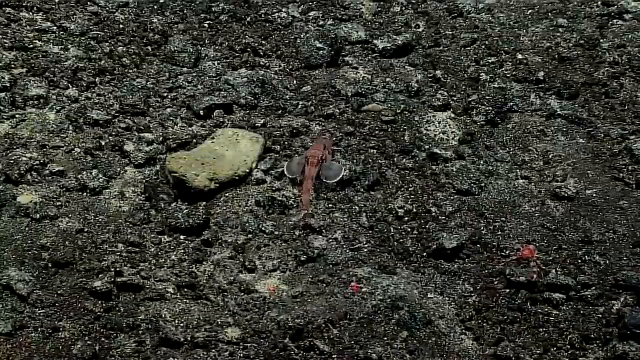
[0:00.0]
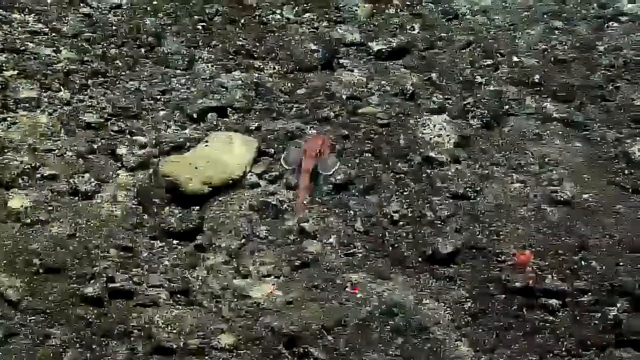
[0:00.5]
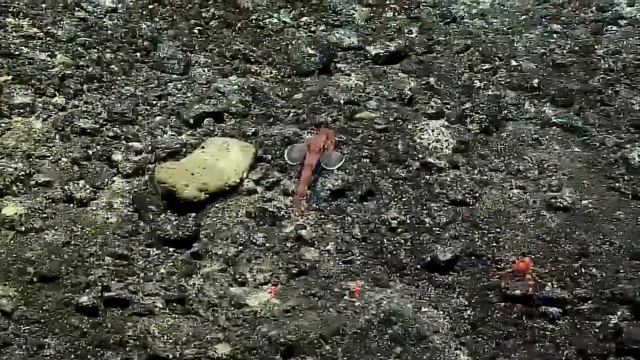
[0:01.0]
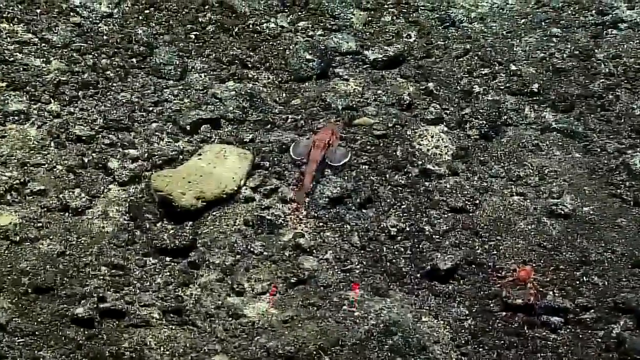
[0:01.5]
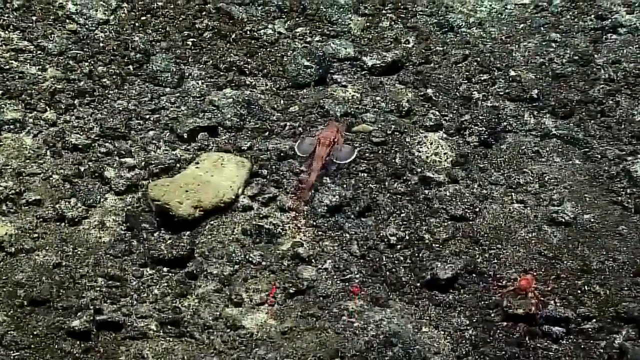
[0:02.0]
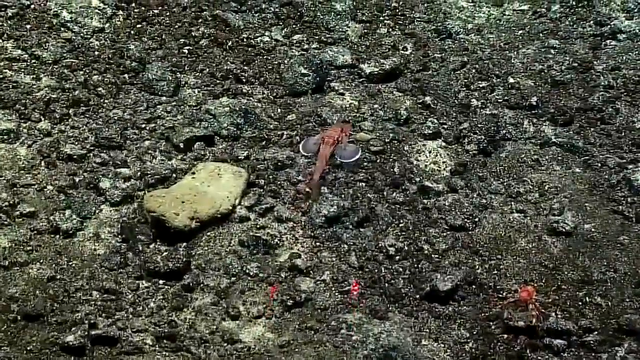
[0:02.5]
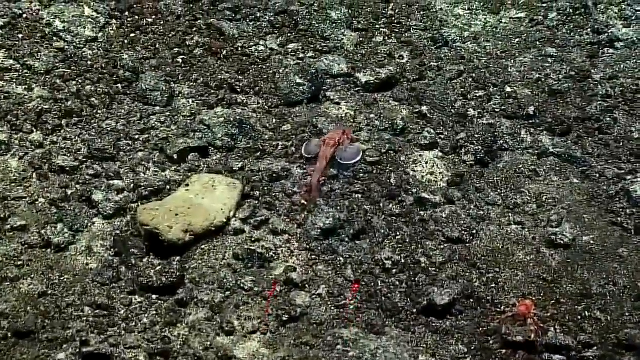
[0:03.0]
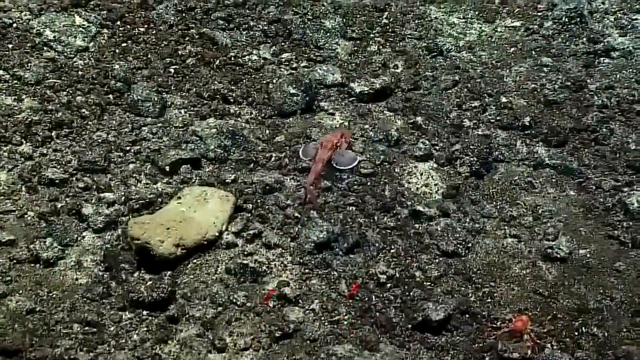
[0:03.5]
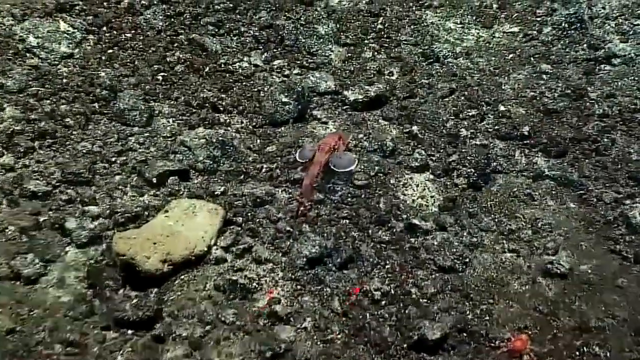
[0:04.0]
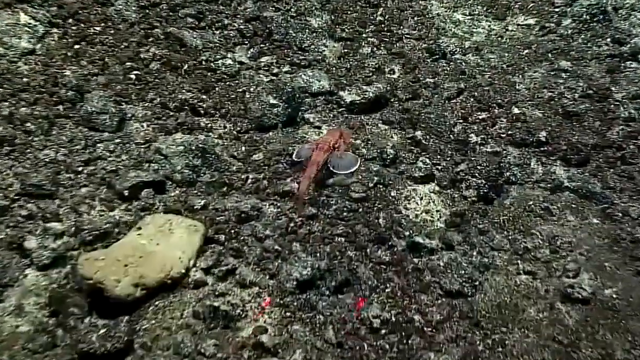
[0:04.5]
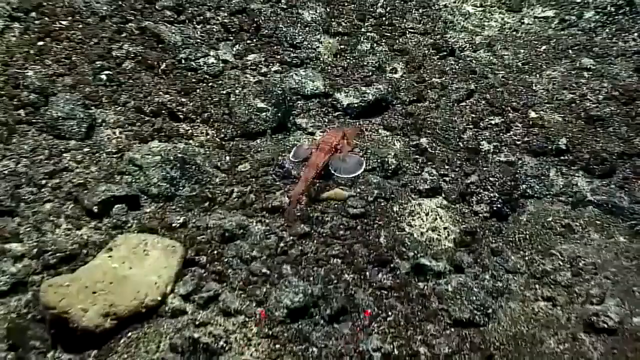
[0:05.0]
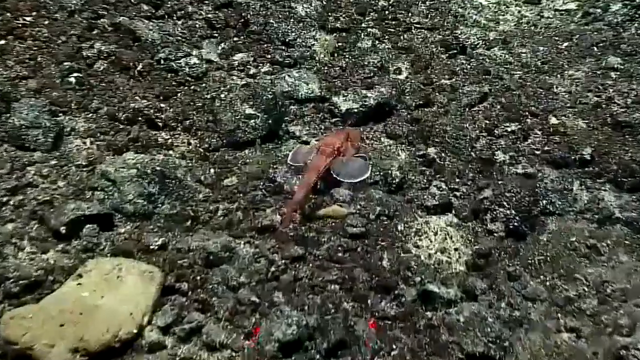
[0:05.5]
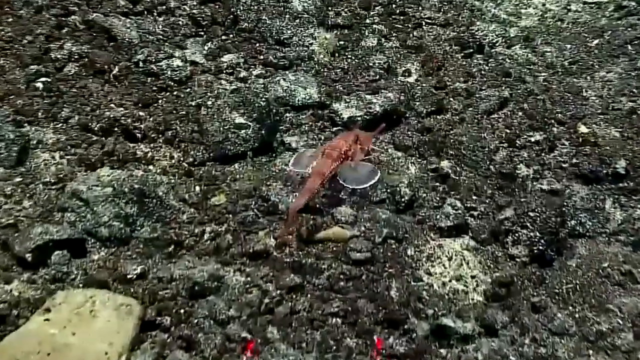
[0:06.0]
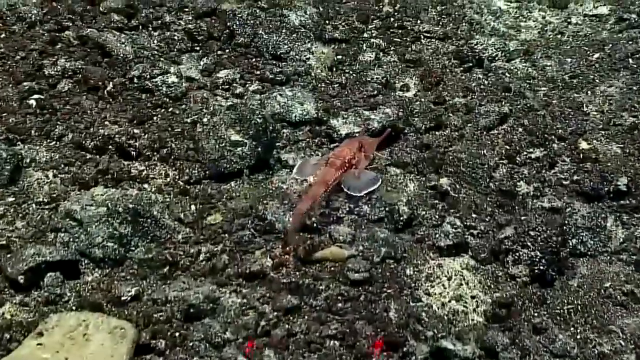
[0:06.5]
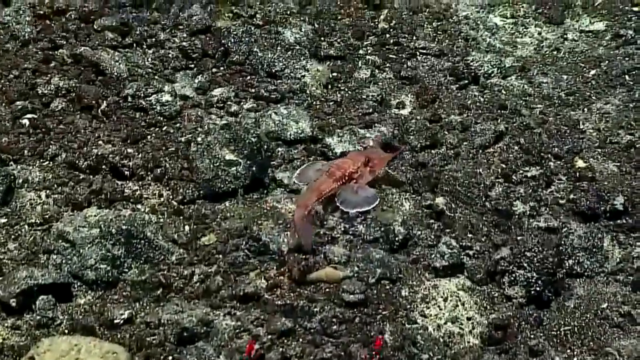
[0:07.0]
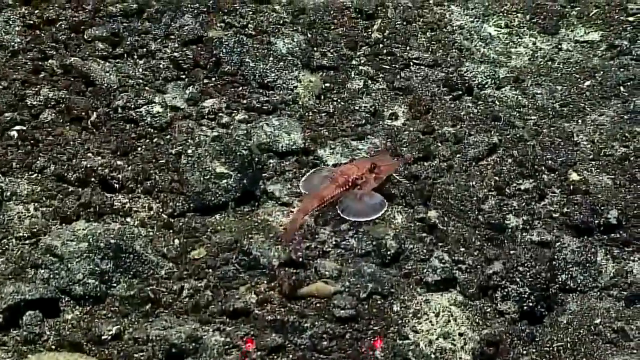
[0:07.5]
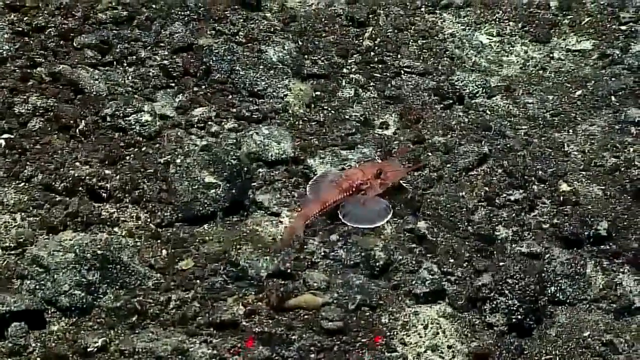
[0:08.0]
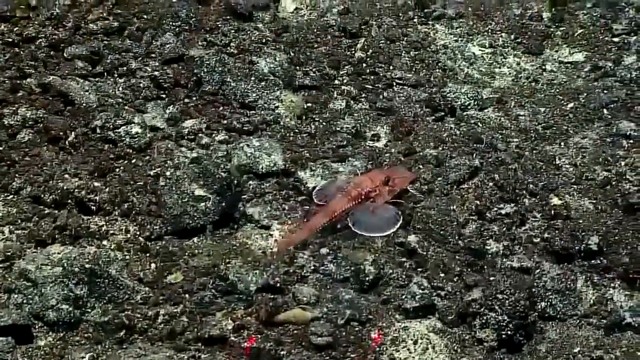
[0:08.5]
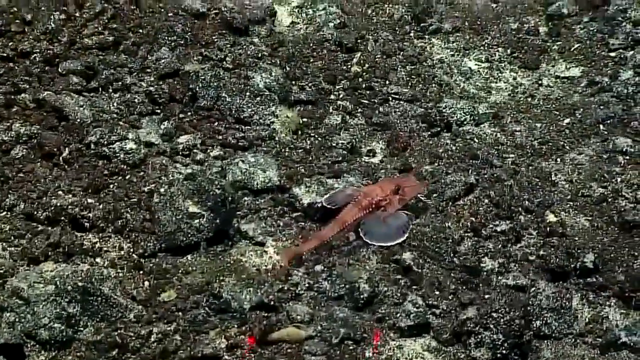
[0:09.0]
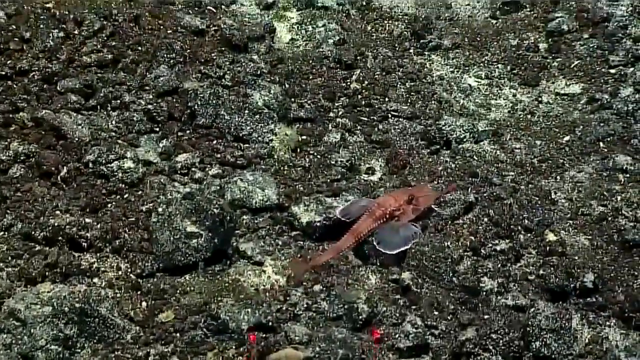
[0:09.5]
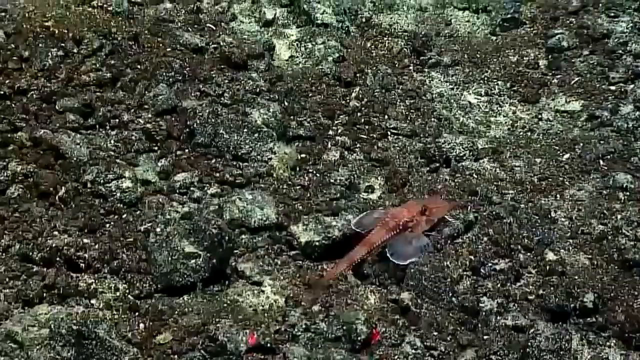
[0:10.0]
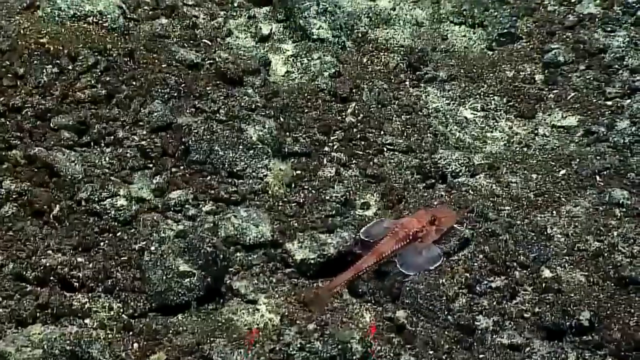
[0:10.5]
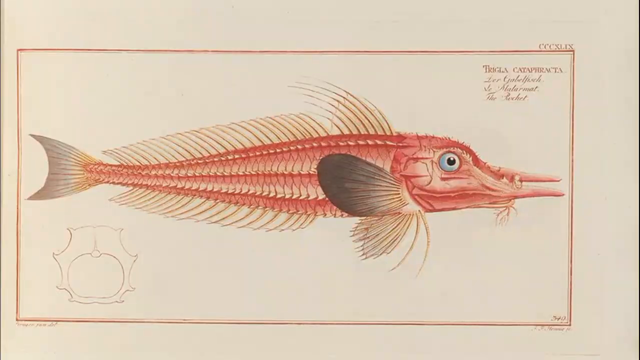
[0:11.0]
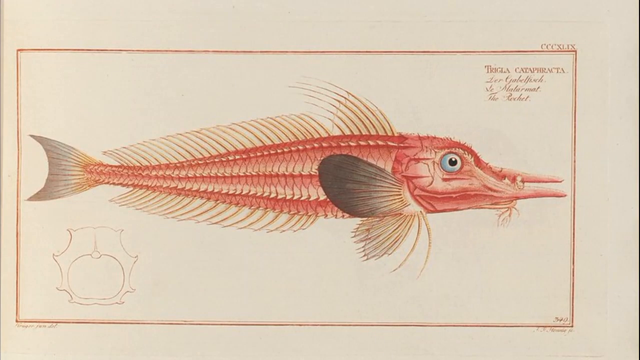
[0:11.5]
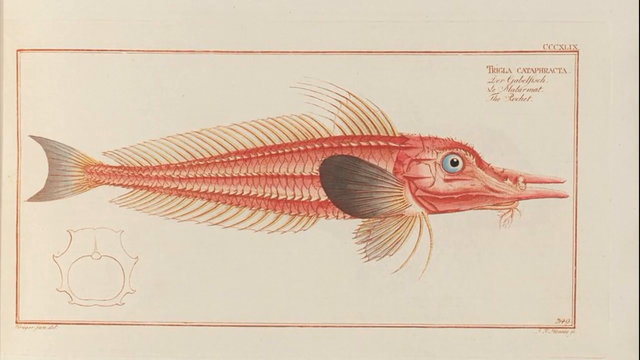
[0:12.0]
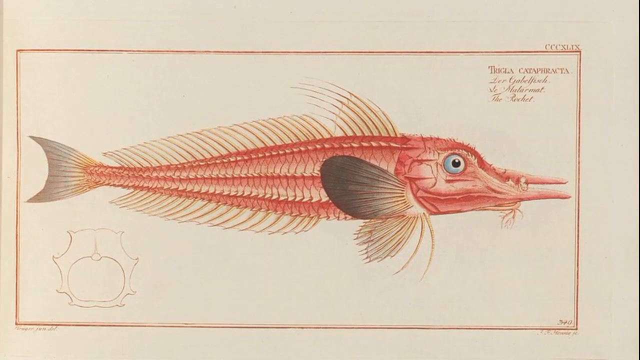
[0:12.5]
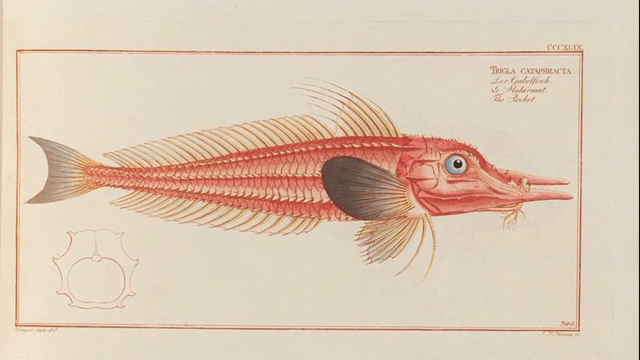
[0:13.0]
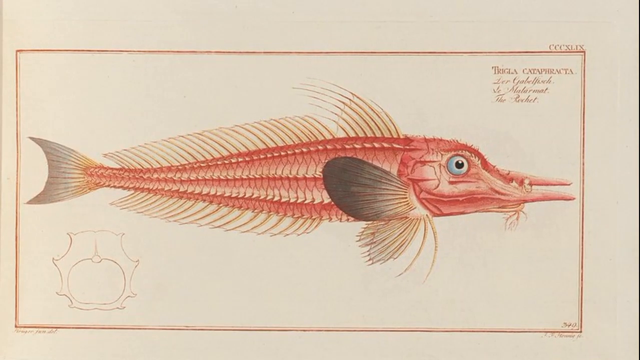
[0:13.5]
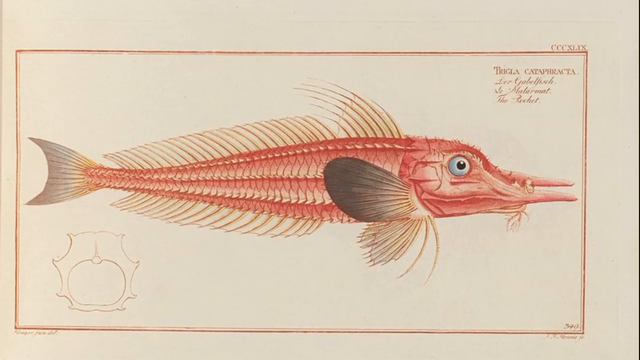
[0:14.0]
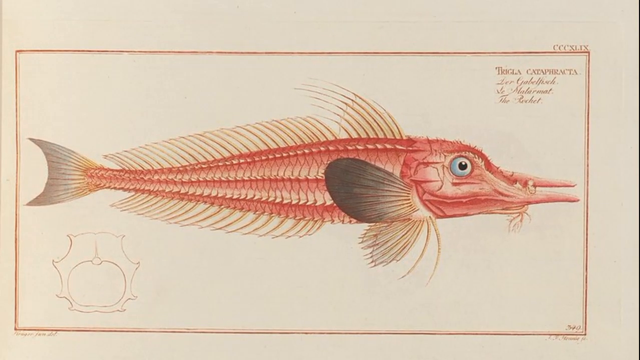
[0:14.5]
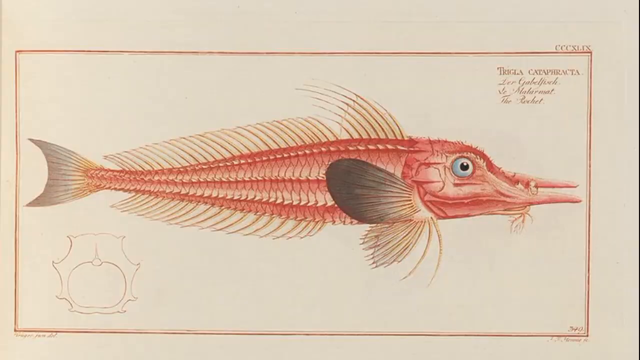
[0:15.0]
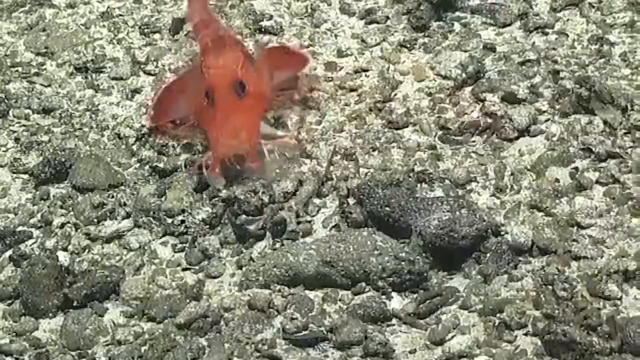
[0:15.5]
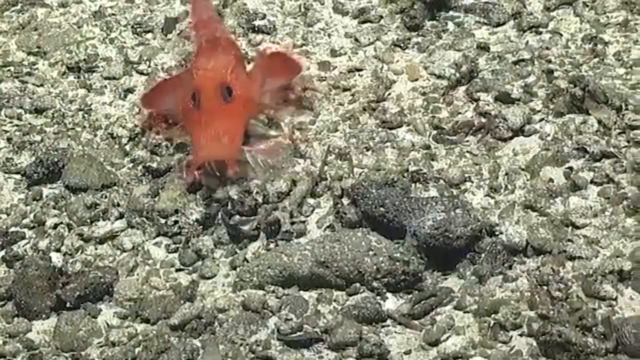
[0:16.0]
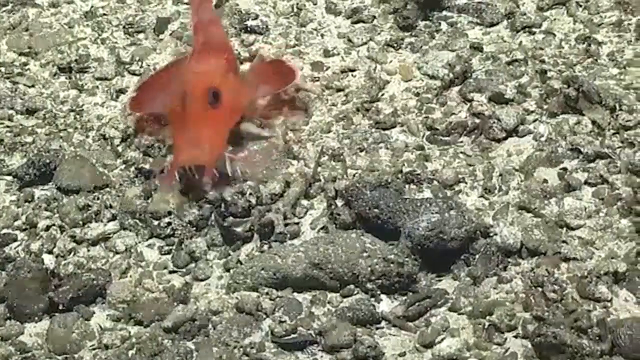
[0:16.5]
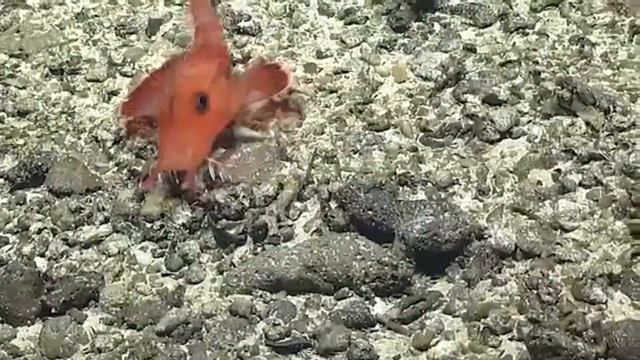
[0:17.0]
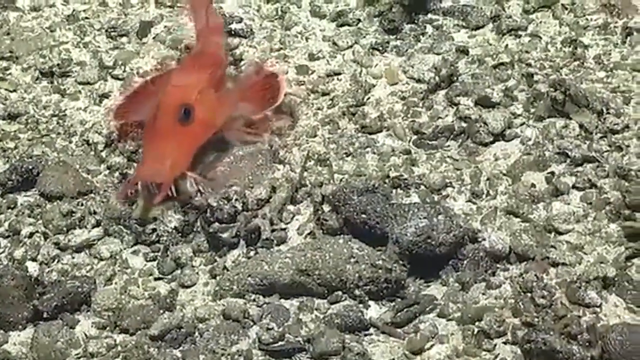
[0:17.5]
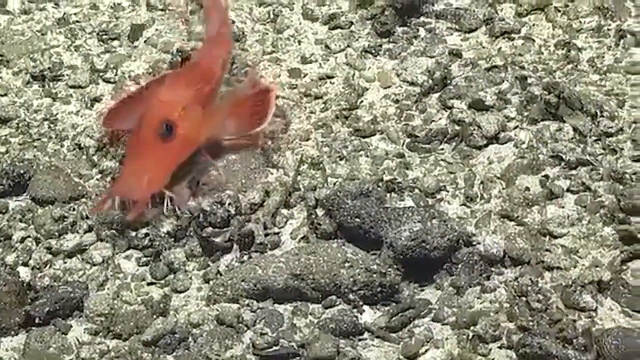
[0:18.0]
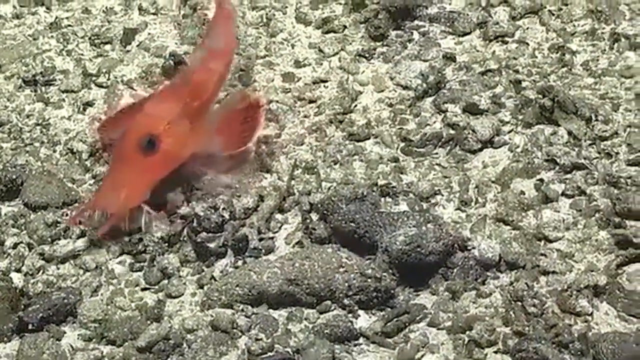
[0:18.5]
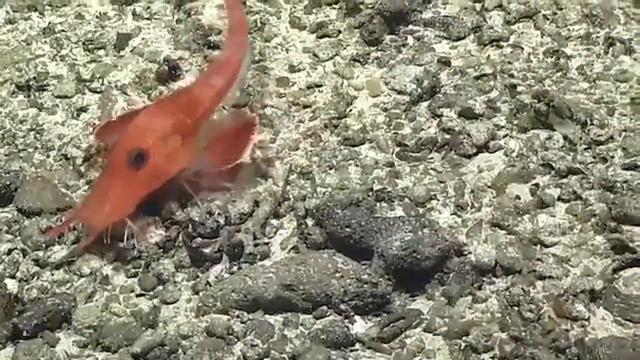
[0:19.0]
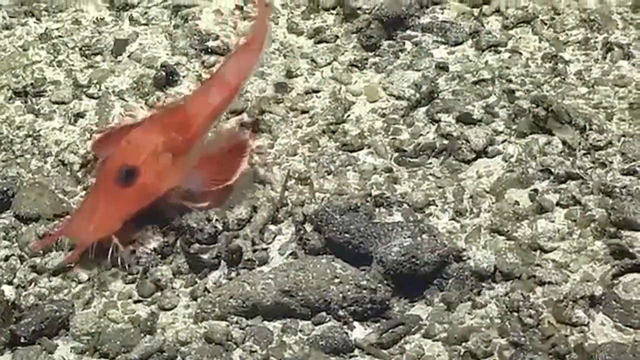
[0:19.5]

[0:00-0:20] Dark-colored rocks appear in an underwater view. A red fish with two circular fins swims upwards in the center of the frame as the camera zooms in on this fish or crustacean. The video then transitions to a manuscript paper-like drawing of the fish, showing a red bony structure with a thin, pointy mouth and circular fins along the side of its body. Bony protrusions run throughout the fish, and it has a rounded, shaded tail. The drawing is done in red and a darker black-ish color, with the eye drawn in and the mouth on the right side of the screen. After the transition, the underwater footage of the fish swimming is shown once again: the fish performs a turn, its eye holes are black, its mouth faces the bottom left-hand corner of the screen, and the fish is in the left half of the screen.